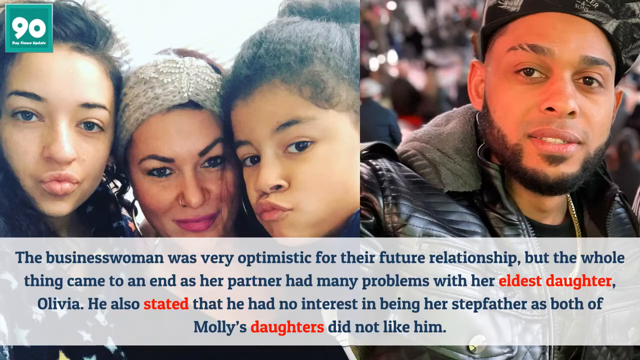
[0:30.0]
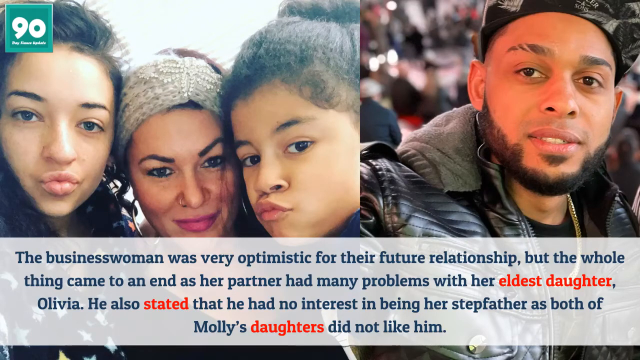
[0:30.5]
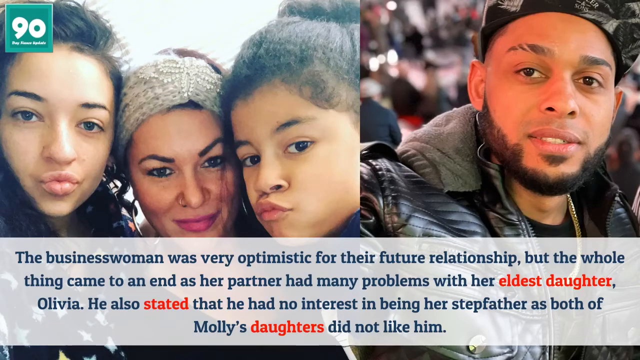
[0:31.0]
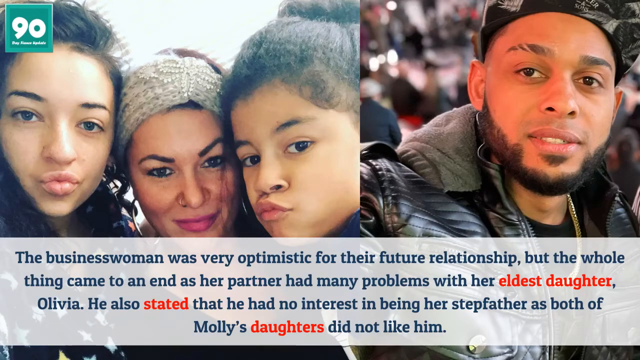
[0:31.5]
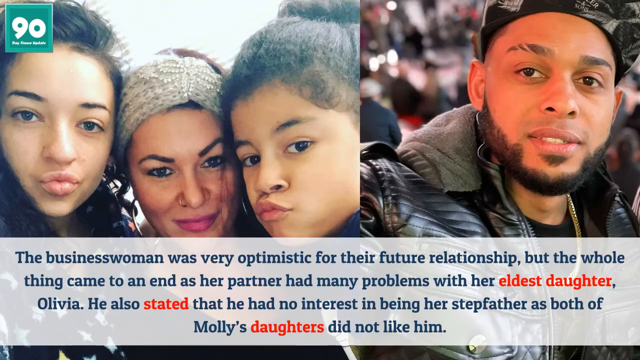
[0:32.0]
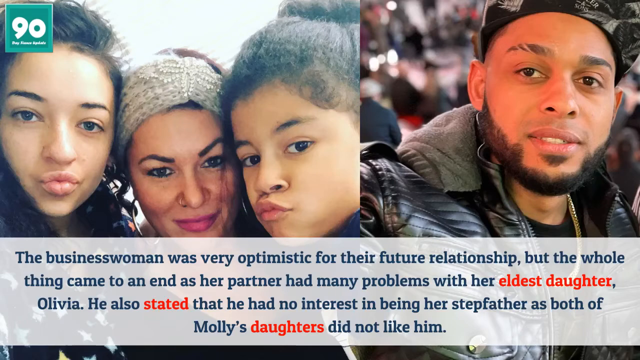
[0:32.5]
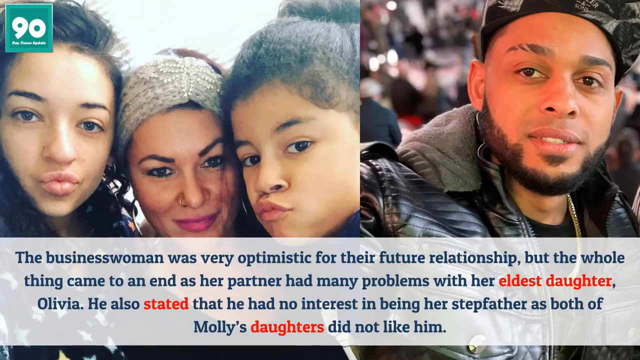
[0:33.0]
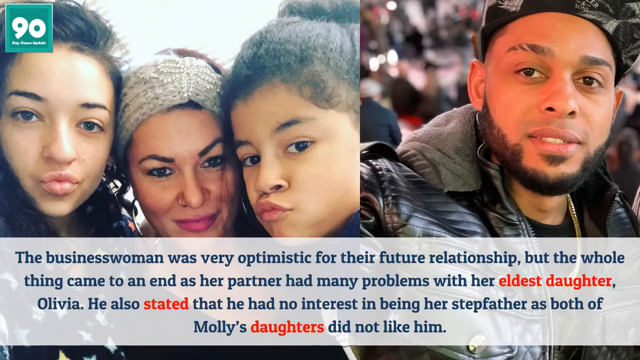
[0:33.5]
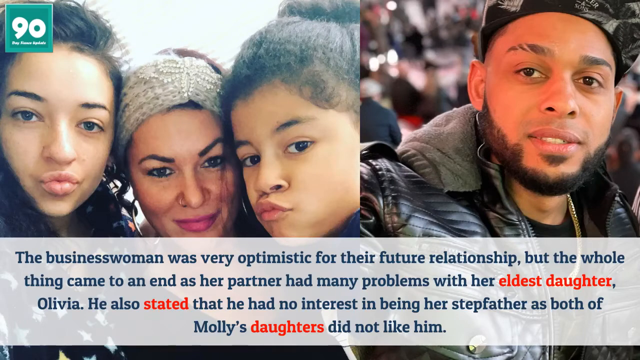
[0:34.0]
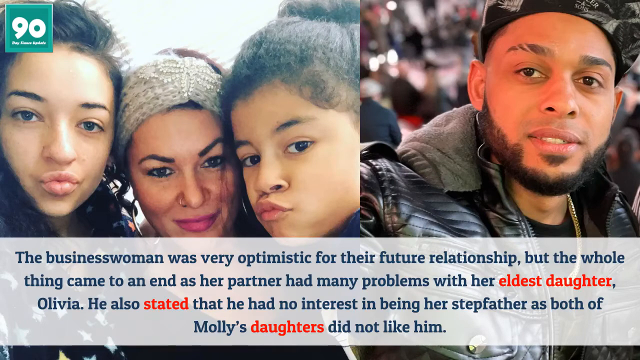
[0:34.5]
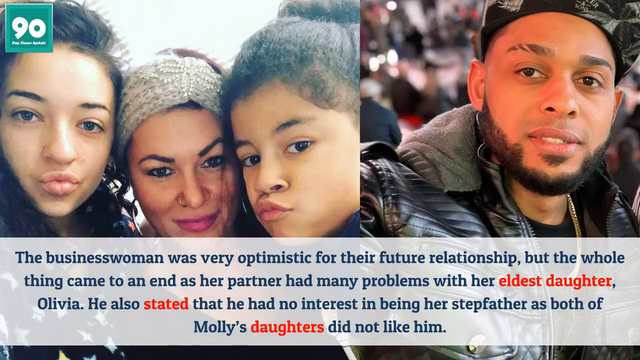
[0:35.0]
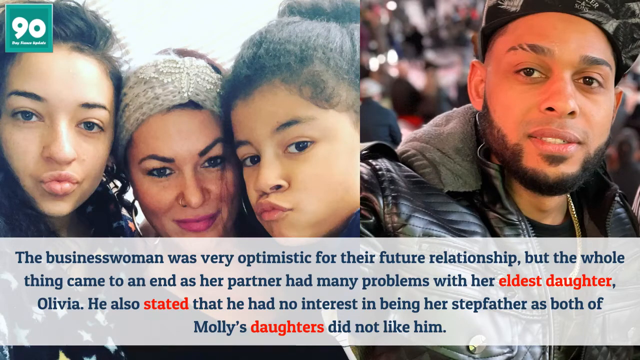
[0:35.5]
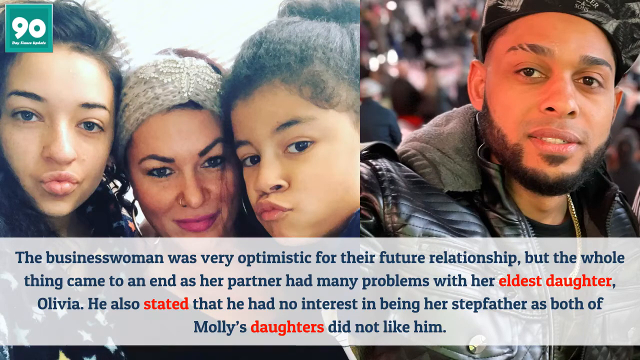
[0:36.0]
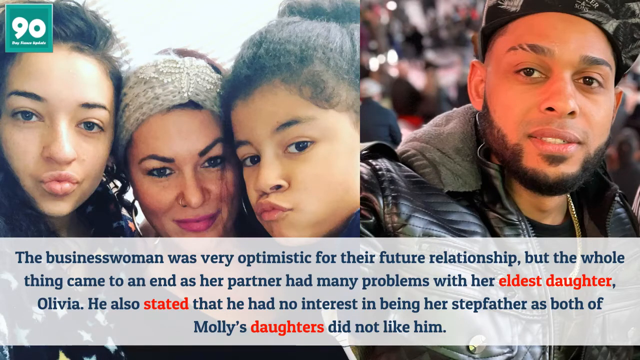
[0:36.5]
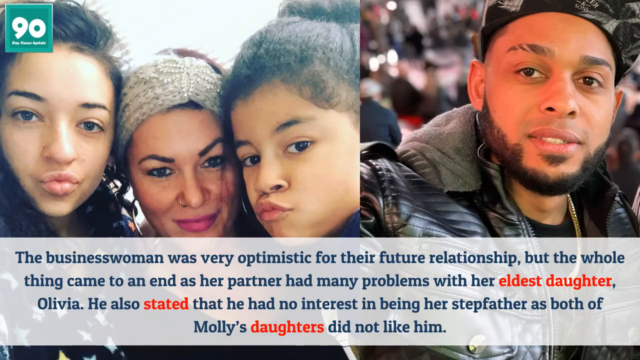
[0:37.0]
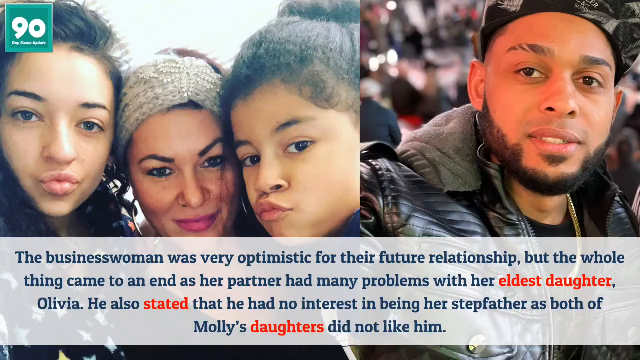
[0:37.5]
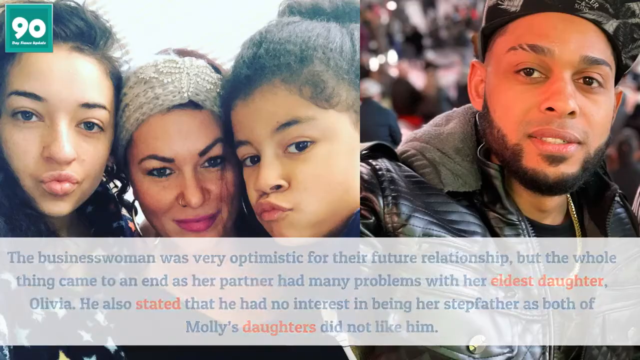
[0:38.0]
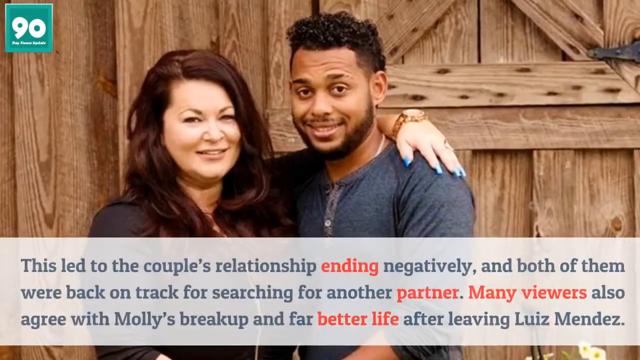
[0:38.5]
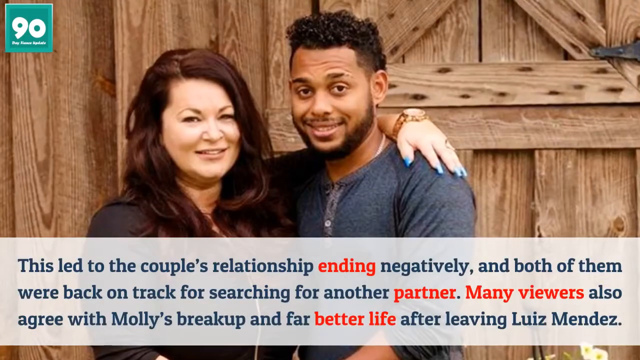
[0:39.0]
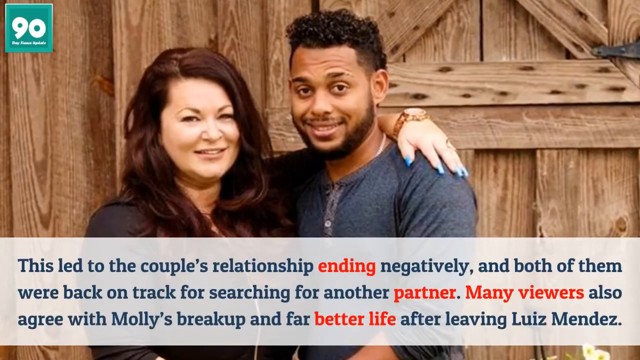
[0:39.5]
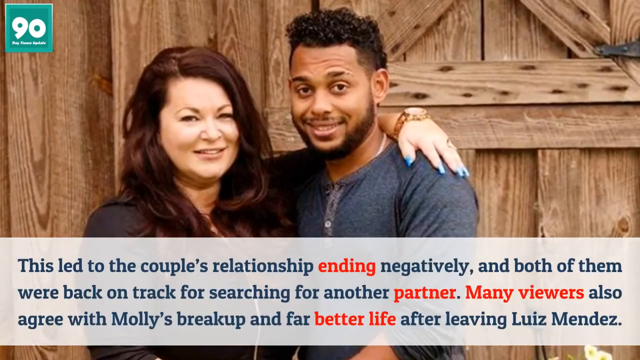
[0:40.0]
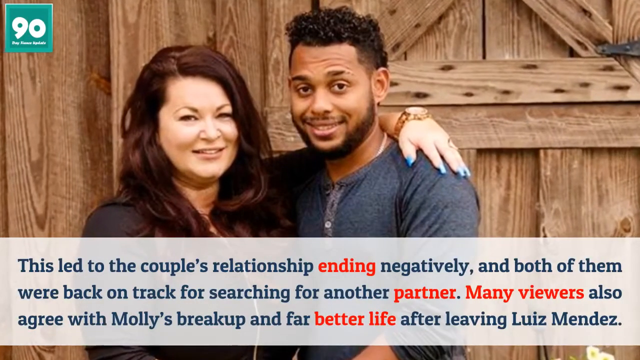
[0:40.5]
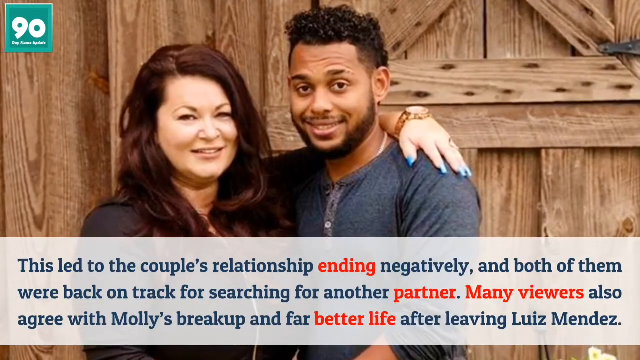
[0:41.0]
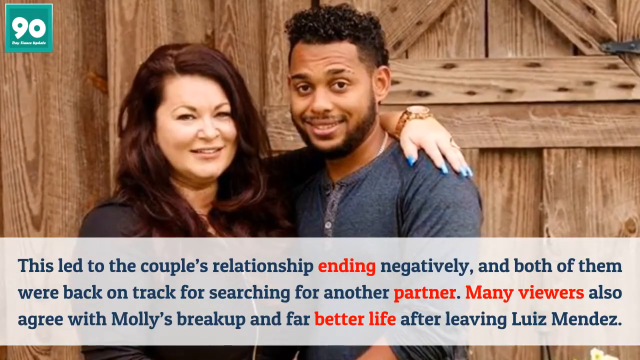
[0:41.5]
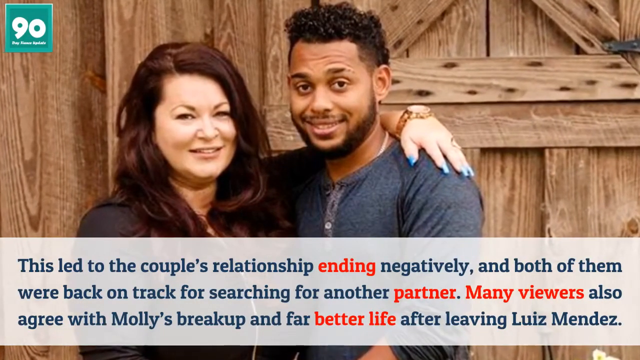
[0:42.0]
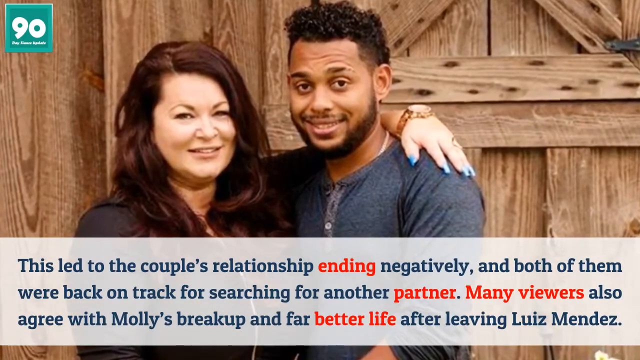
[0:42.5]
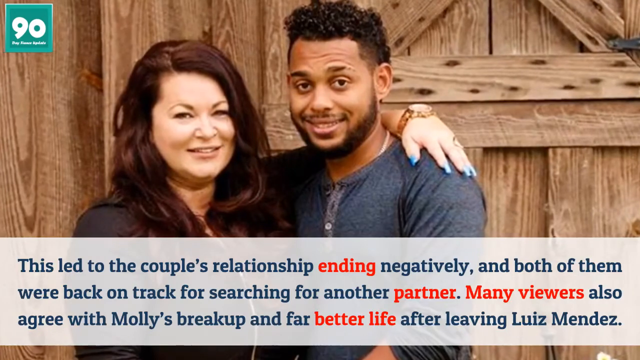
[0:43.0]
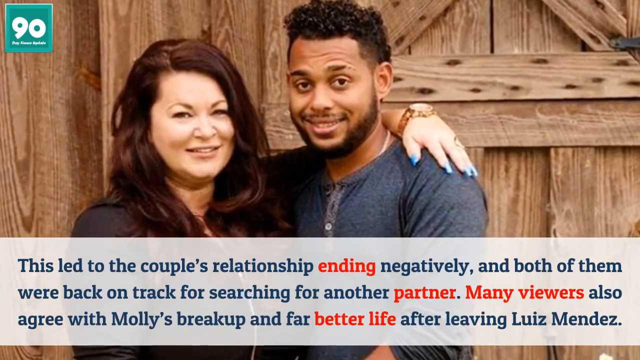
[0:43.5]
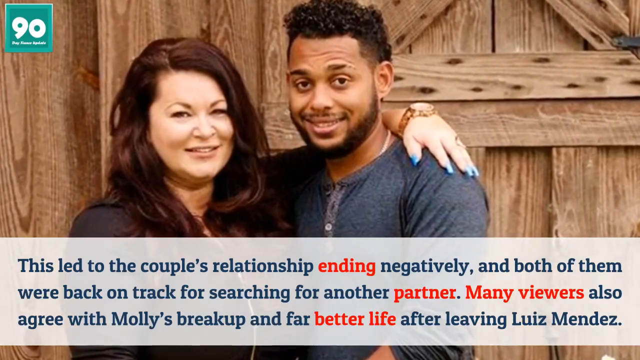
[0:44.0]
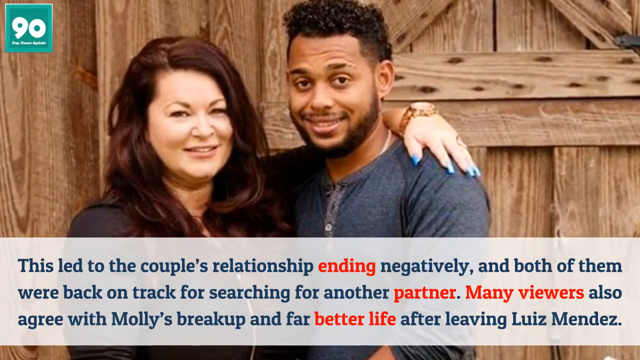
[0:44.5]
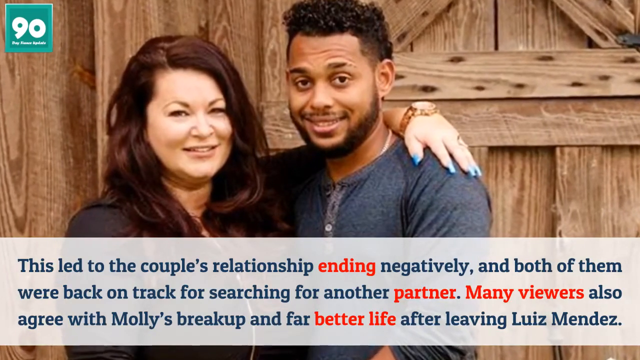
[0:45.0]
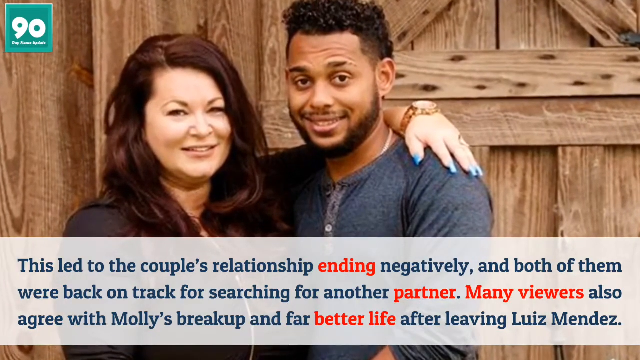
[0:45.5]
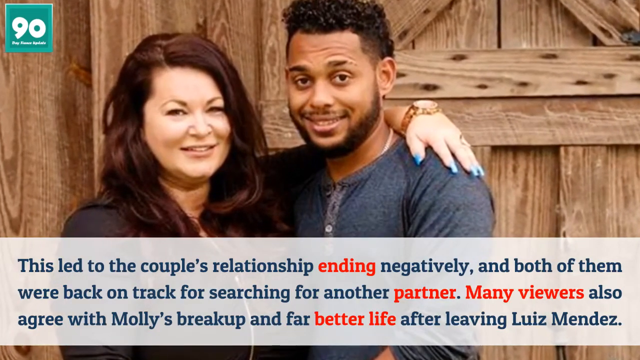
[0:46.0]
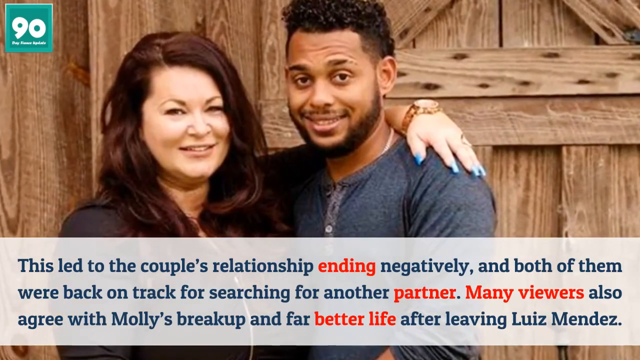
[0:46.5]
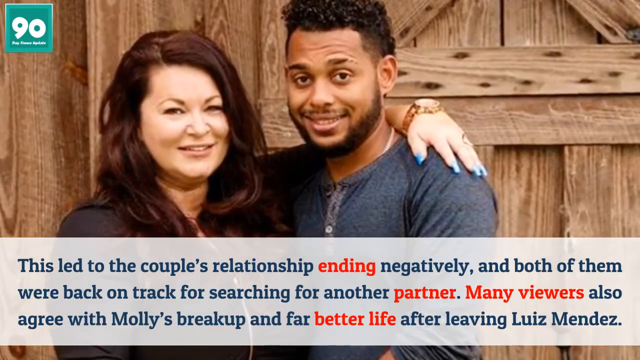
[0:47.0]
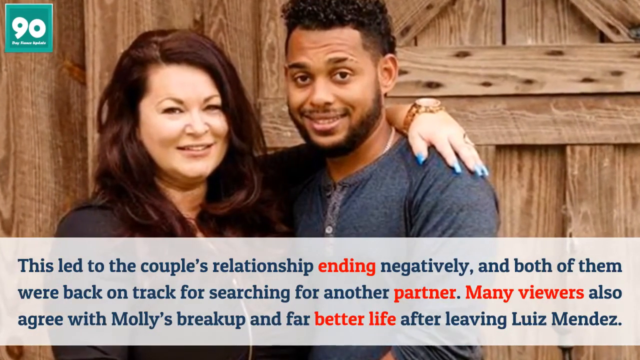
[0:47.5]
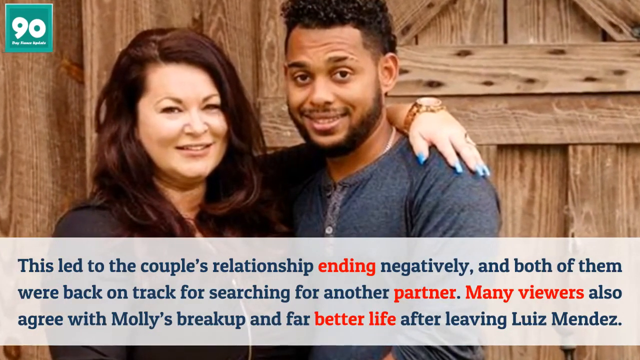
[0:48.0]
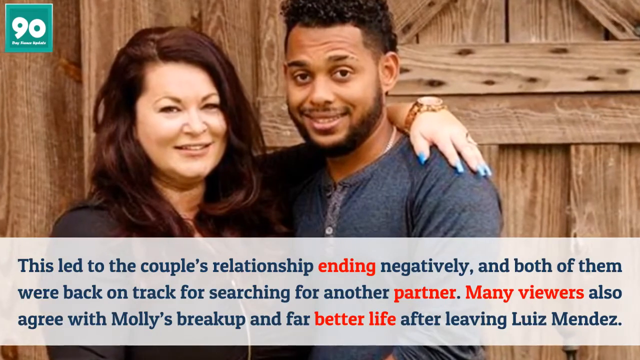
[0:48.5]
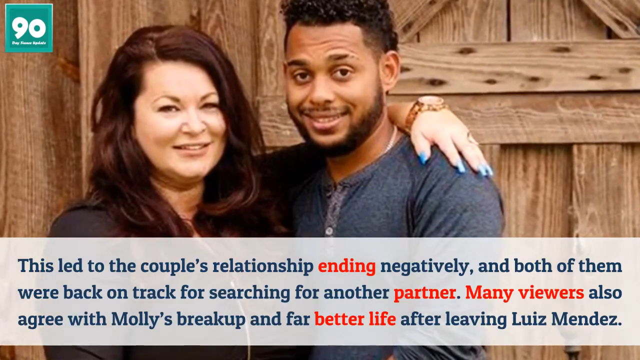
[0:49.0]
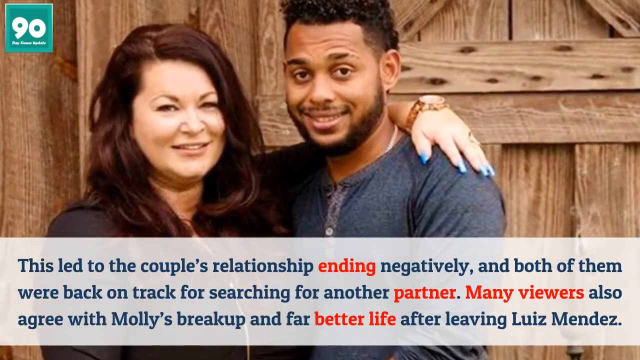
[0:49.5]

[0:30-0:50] Two images are shown. On the left side is an image of three people: a woman in the middle with children to her left and right. The children on the left and right are puckering their lips, and all three are posing for the camera. On the right side is an image of a man with threaded eyebrows, a cap, a black coat, and a well-trimmed goatee and beard. A transparent white banner is overlaid at the bottom of the two images. It says "the businesswoman was very optimistic for their future relationship but the whole thing came to an end as her partner had many problems with her eldest daughter Olivia. He also stated that he had no interest in being her stepfather as both of Molly's daughters did not like him."